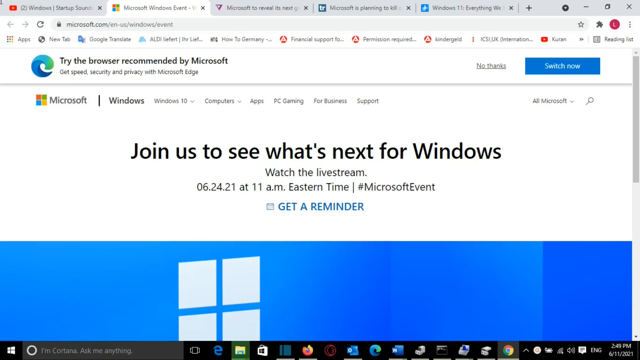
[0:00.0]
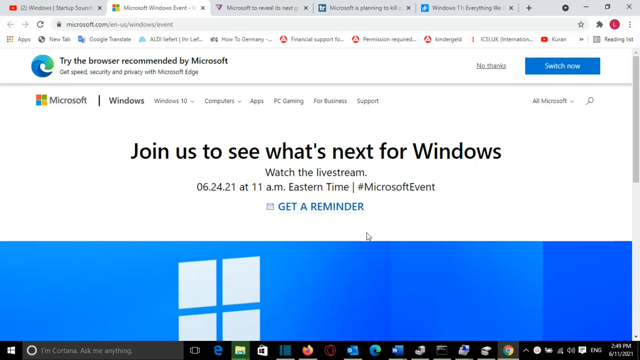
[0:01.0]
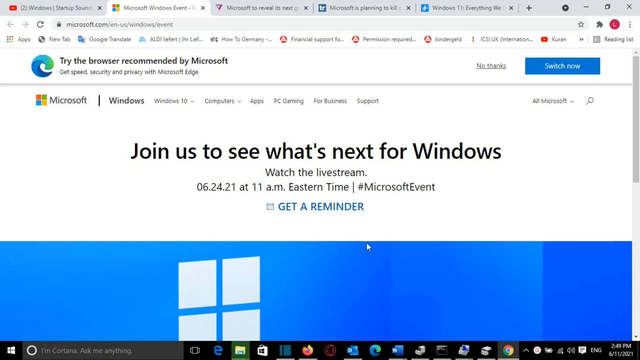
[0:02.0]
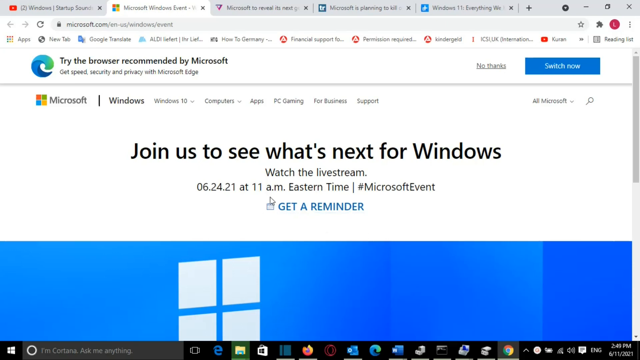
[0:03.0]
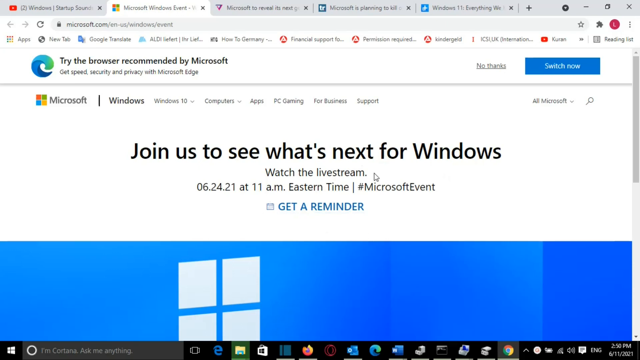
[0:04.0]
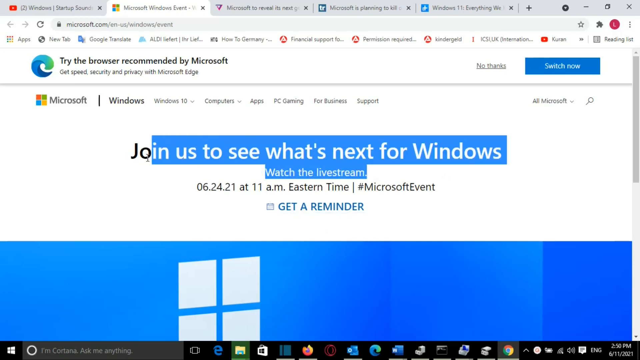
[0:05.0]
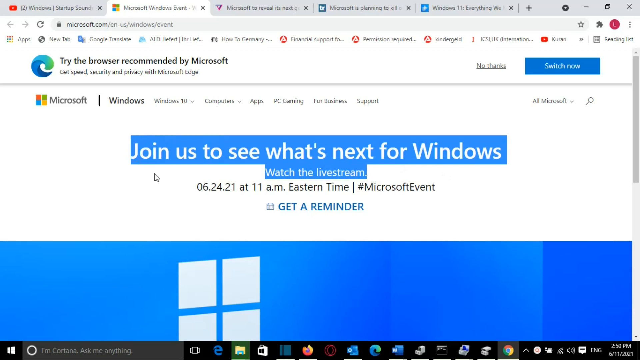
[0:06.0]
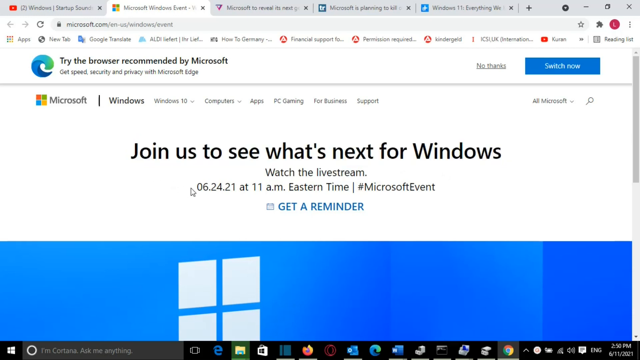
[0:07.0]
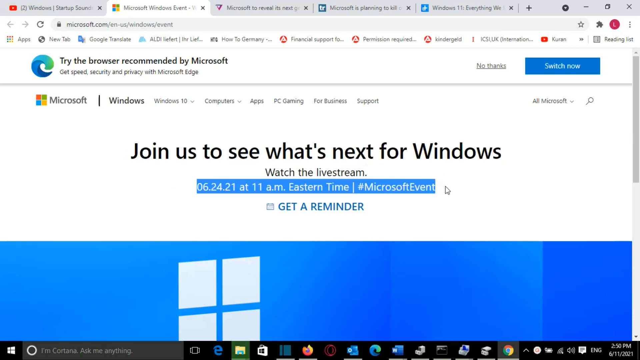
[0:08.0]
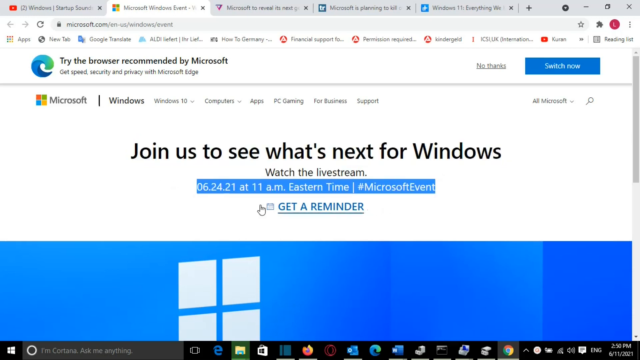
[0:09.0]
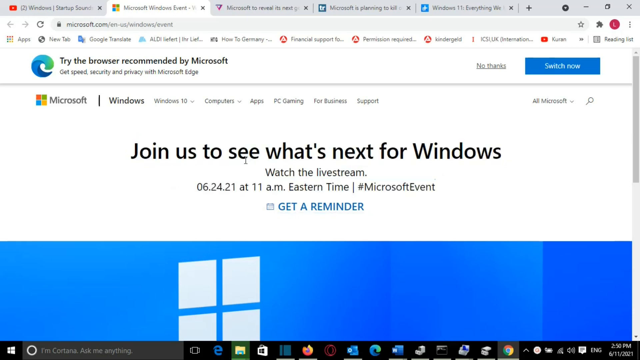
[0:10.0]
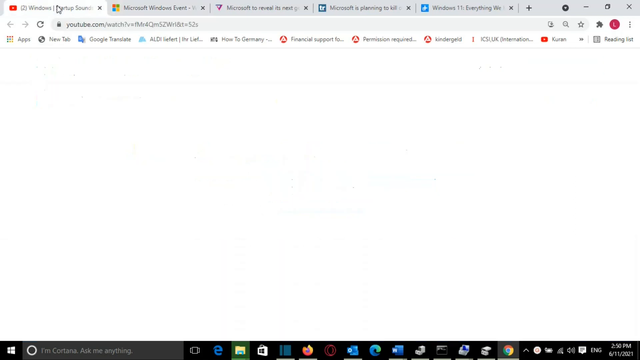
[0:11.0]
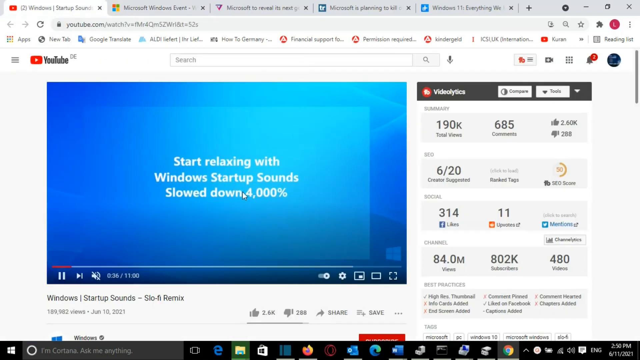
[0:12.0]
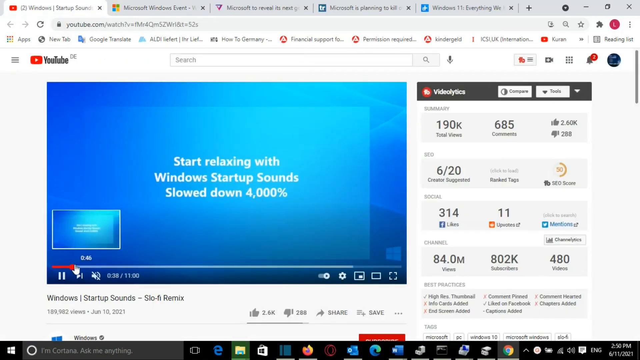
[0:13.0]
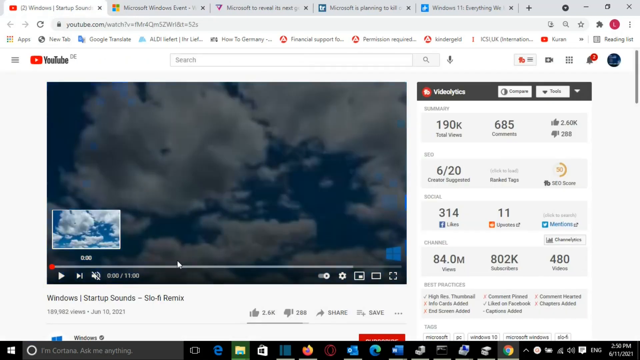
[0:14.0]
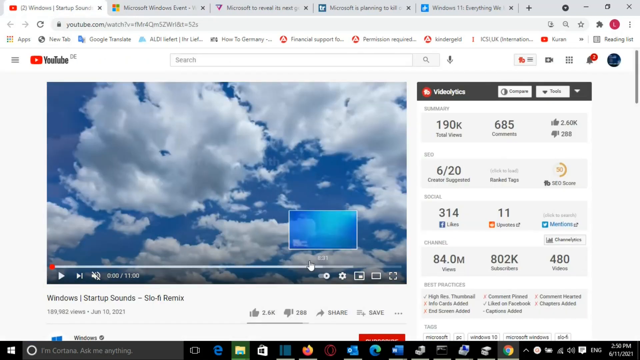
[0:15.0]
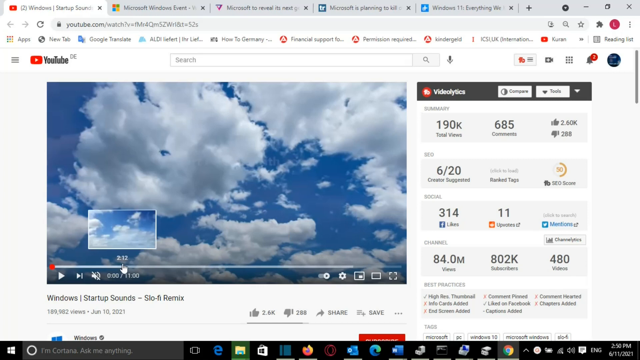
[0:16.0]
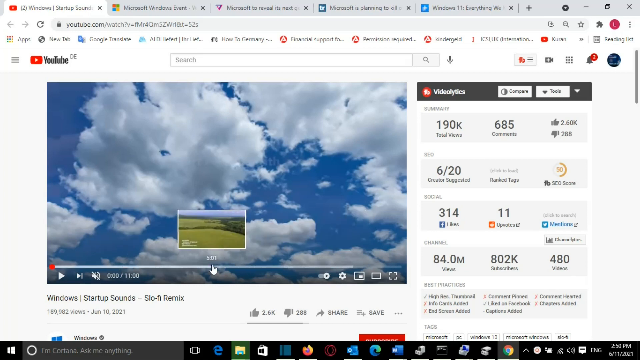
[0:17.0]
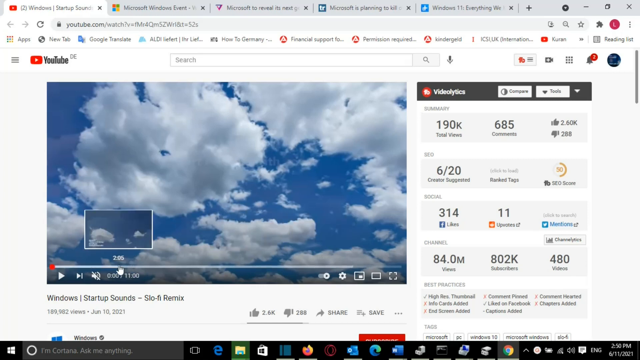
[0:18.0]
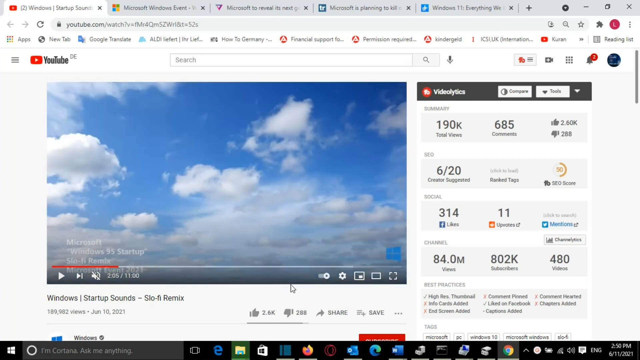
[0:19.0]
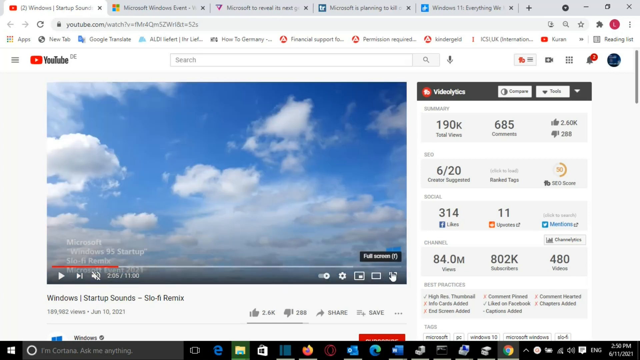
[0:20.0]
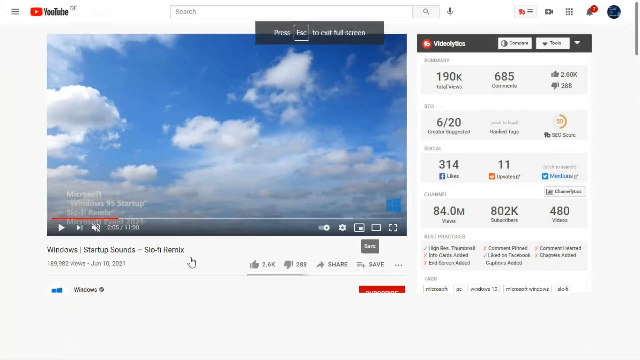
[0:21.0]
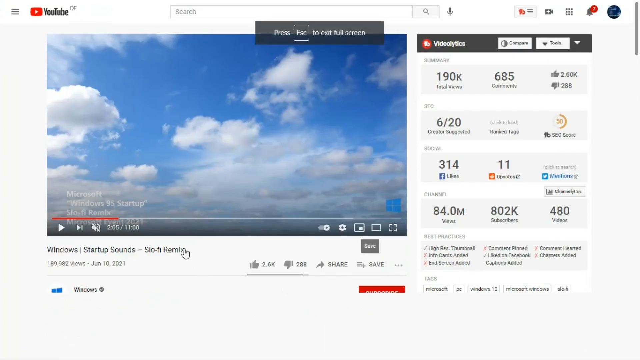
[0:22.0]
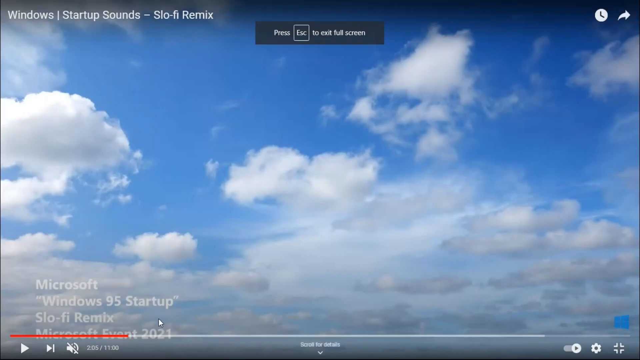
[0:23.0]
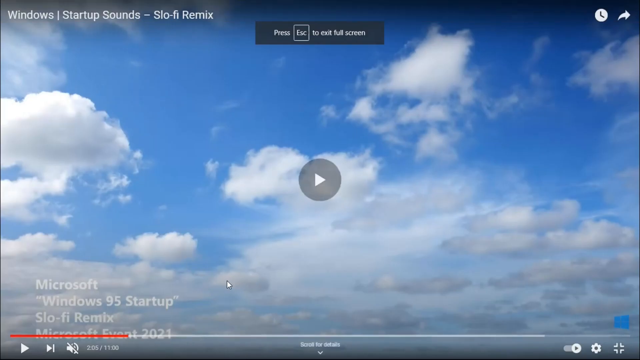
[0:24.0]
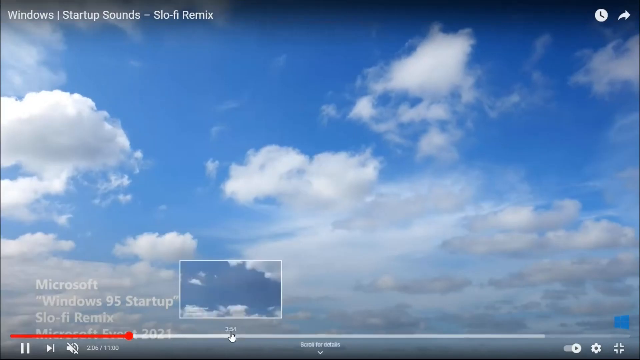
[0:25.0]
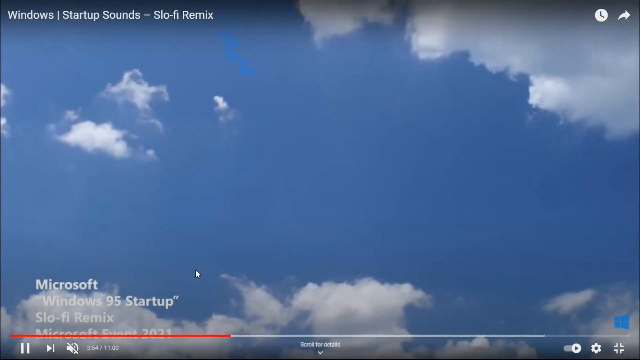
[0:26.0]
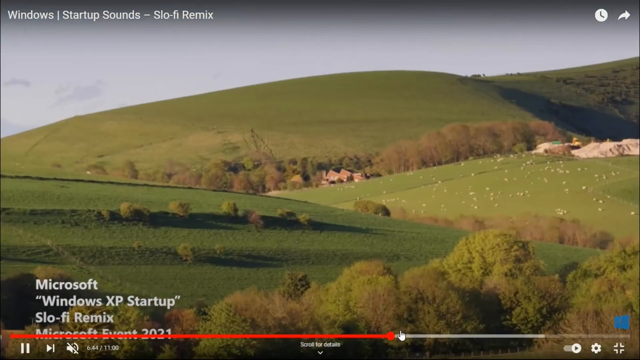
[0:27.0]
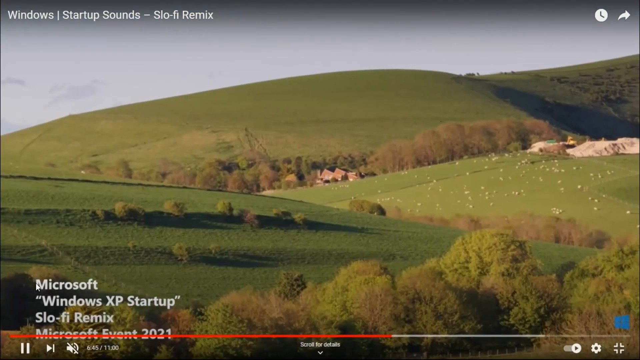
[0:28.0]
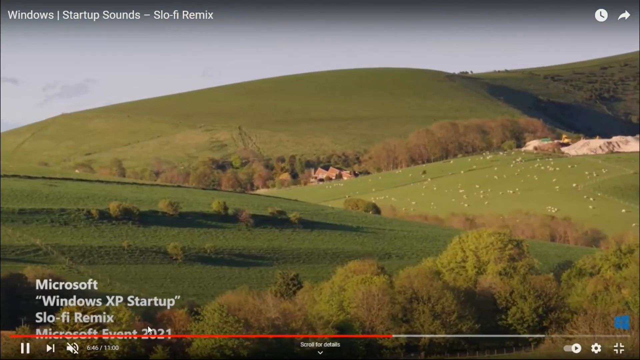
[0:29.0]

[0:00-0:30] A web browser has about five tabs open, and the user is on microsoft.com. A message in the center reads "join us to see what's next for Windows. Watch the live stream at 11 a.m eastern time. #Microsoft event," and below that is "get a reminder." A cursor highlights the words "Join us to see what's next for Windows. Watch the live stream," then highlights the messages below. On another screen, YouTube.com is open with a video that displays the message "start relaxing with Windows startup sounds slowed down 4000%." The cursor starts the video from the very beginning, then moves and clicks on different time stops in the video. The video is enlarged to full screen, showing clouds and different naturistic views.